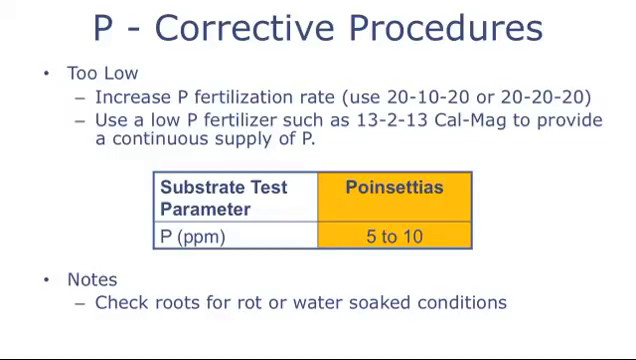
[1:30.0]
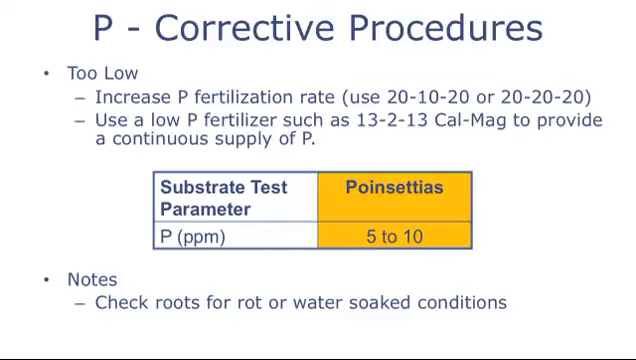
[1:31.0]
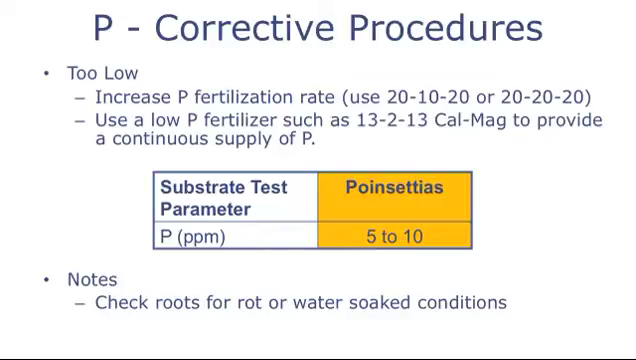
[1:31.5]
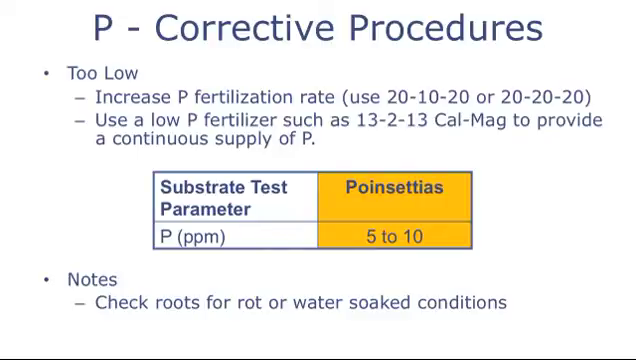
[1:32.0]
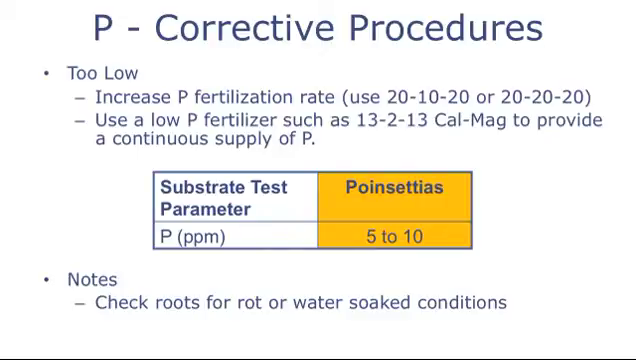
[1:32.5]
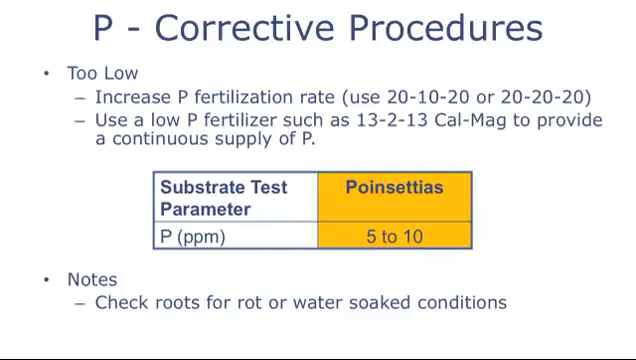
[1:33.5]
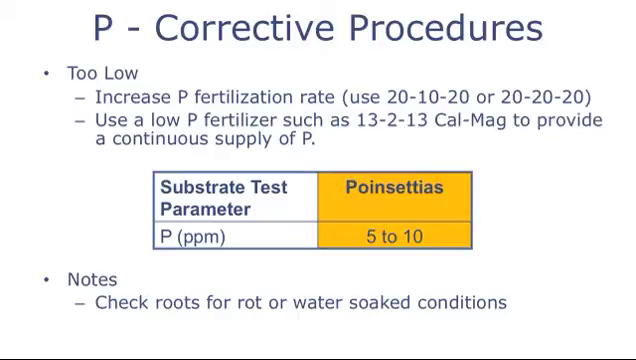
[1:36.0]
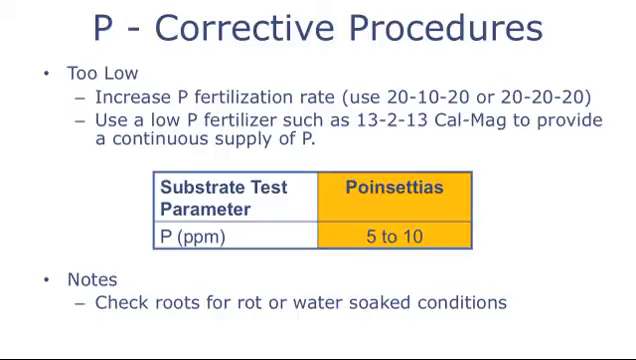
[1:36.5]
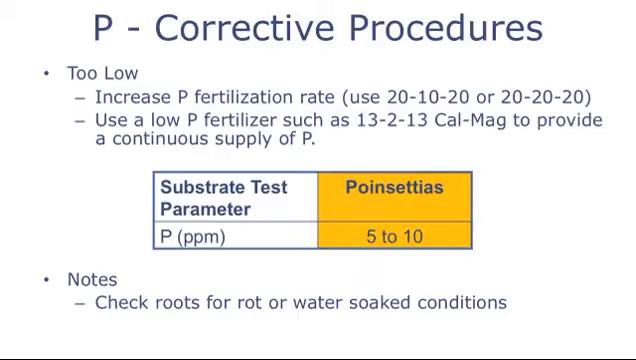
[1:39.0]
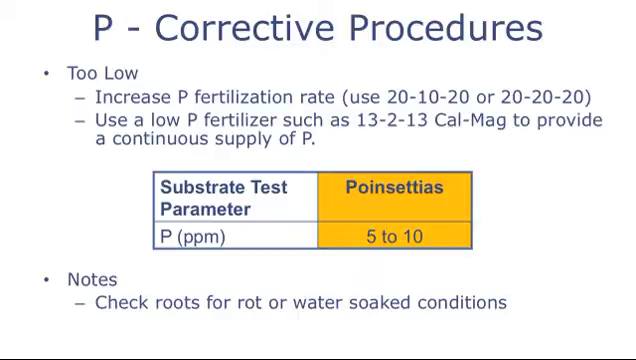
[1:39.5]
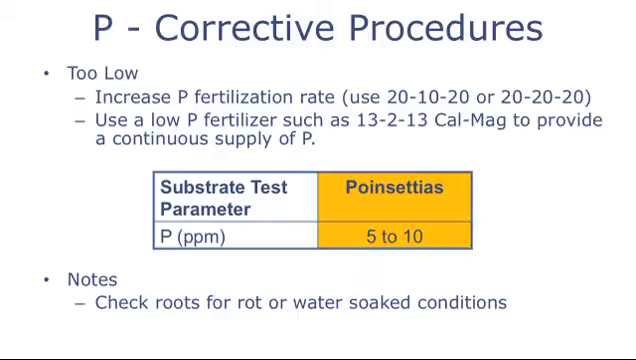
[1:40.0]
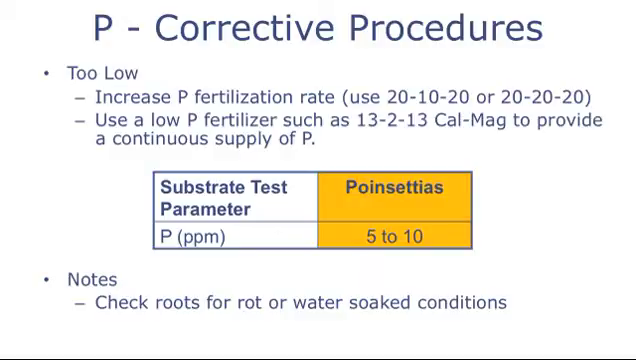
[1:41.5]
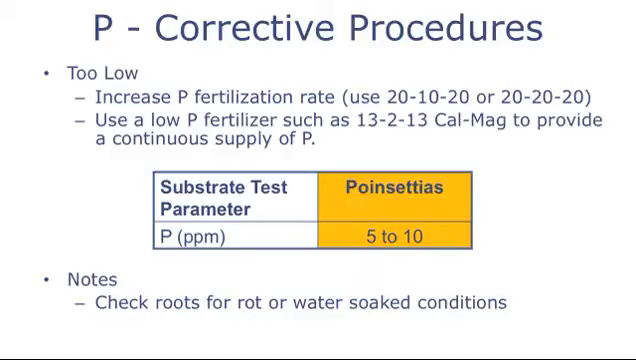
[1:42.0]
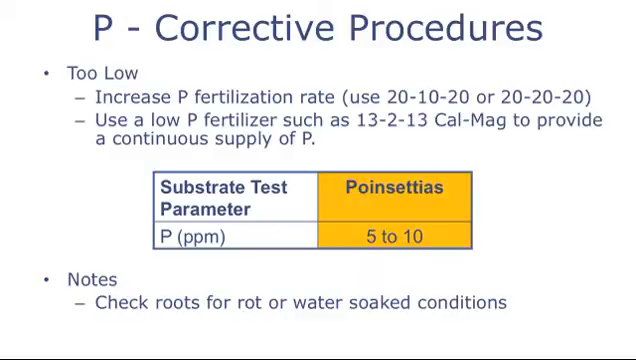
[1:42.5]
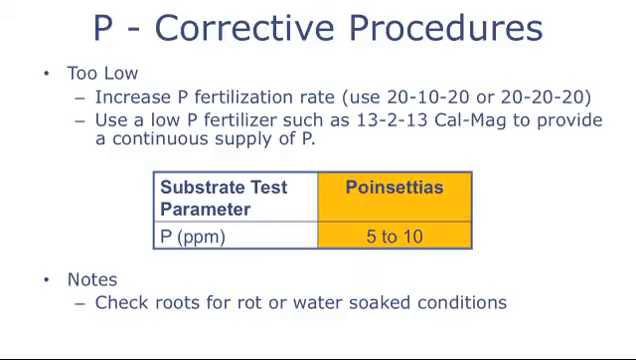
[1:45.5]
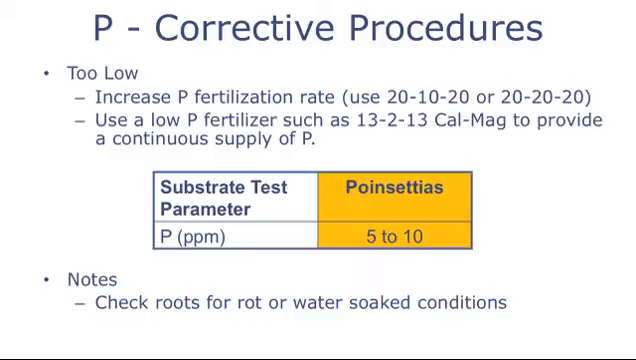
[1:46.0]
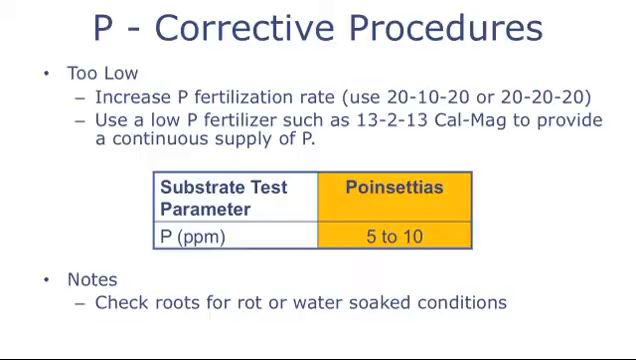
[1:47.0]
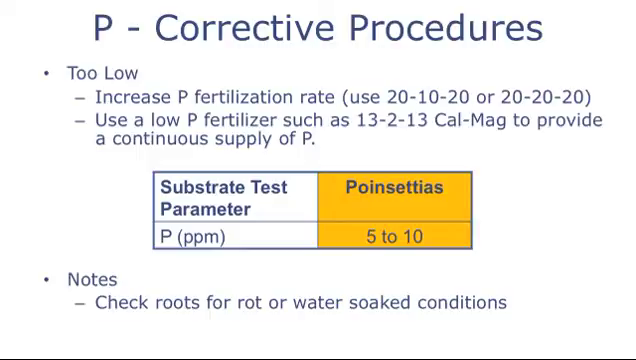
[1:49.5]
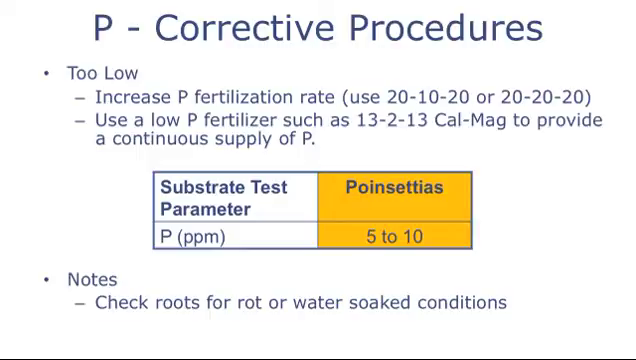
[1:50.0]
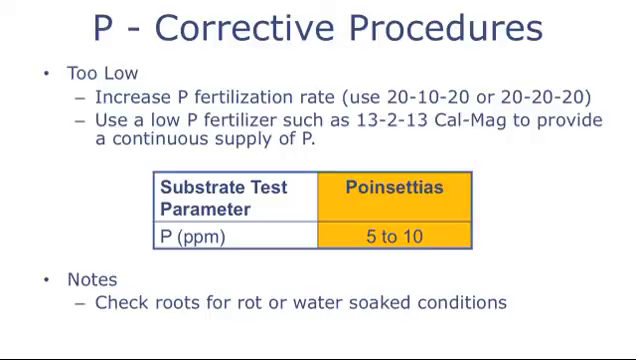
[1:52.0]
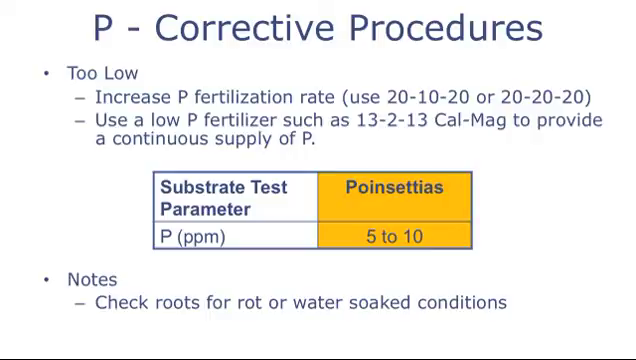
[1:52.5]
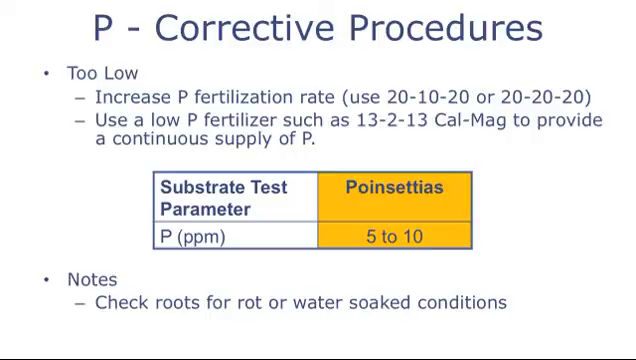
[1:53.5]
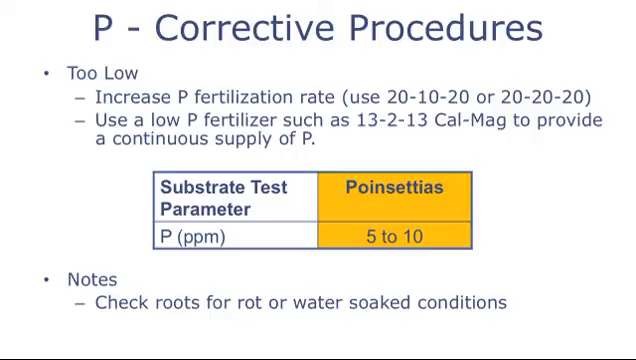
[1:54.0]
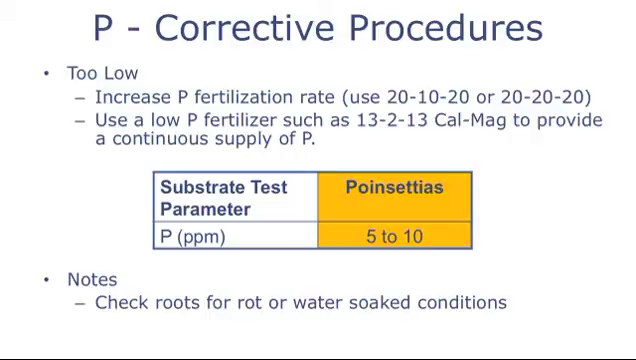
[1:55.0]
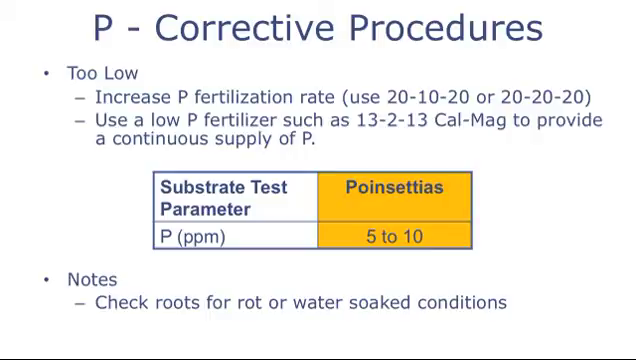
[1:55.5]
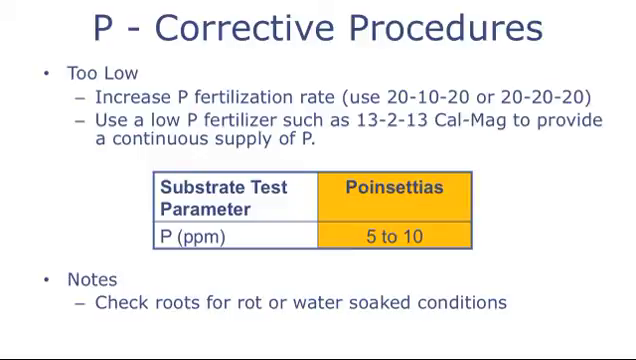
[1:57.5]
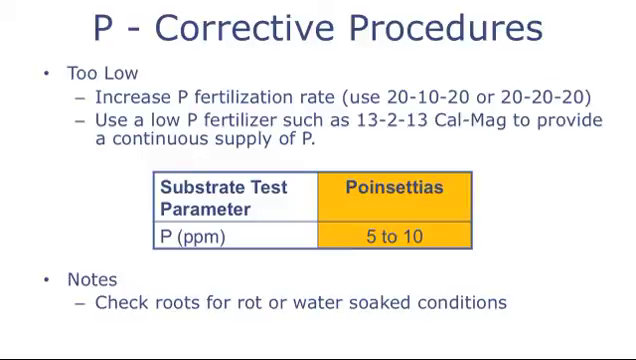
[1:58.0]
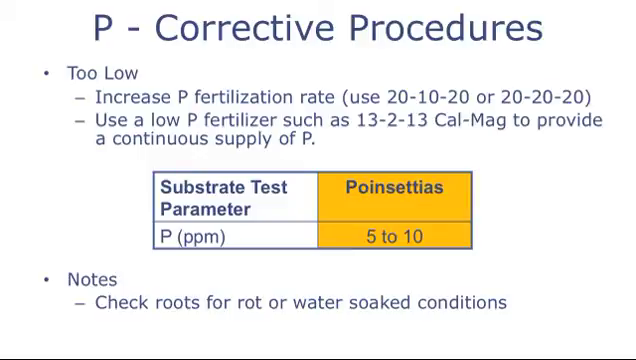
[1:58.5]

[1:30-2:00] A slide of text with bullet points and hyphen points on a white background has the title "P-corrective procedures" in blue text at the top center. Beneath the title, the first bullet point, in blue text, reads "too low." A hyphen point beneath it reads "increase P fertilization rate (use 2010-20 or 2020-20," and a second hyphen point reads "use a low P fertilizer such as 13-13 Cal Mag to provide a continuous supply of P." Below that, a small chart has a header on the left reading "substrate test parameter" in blue text, with "P (PPM)" beneath it. On the right, a yellow header reads "poinsettias" in blue text, with "5-10" beneath it. At the bottom, another bullet point reads "notes" in blue text, with a hyphen point reading "check roots for rot or water soaked conditions." The bullet points and hyphen points are at the top center of the screen, the chart is in the very center, and the second bullet point with its hyphen point is at the bottom center.